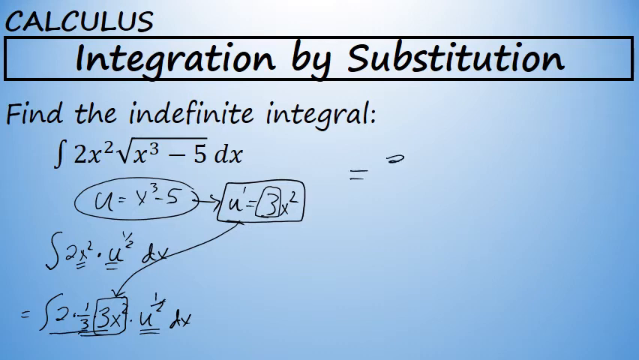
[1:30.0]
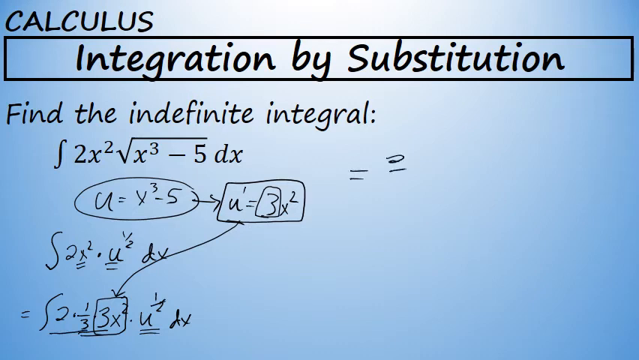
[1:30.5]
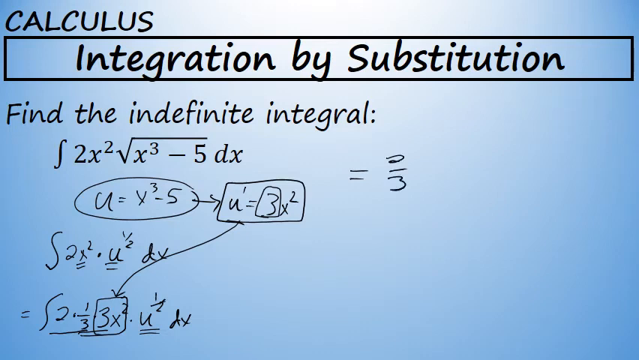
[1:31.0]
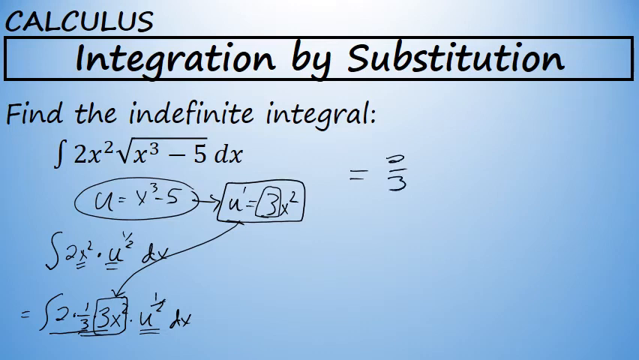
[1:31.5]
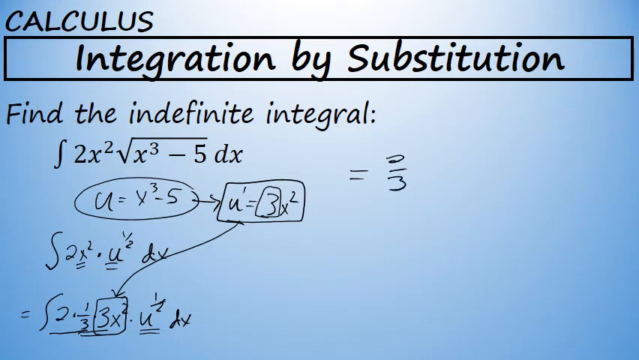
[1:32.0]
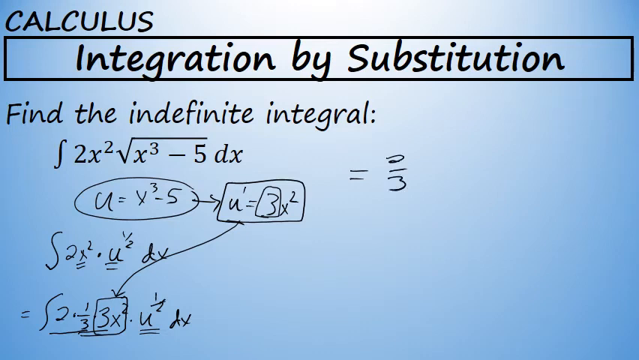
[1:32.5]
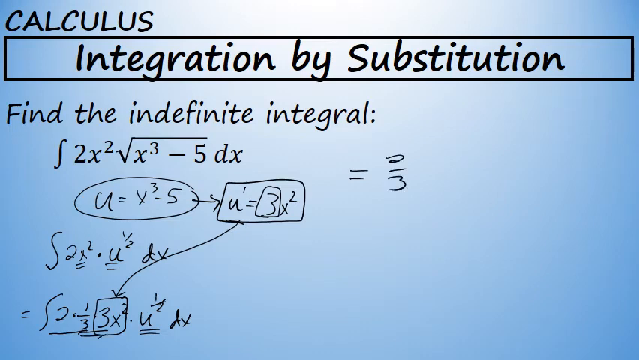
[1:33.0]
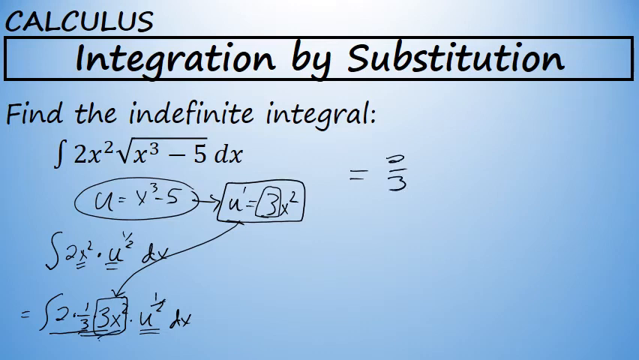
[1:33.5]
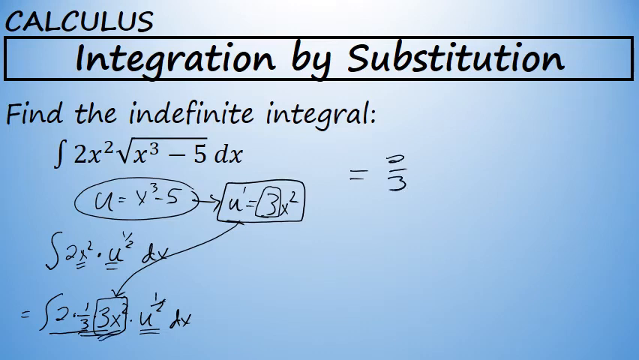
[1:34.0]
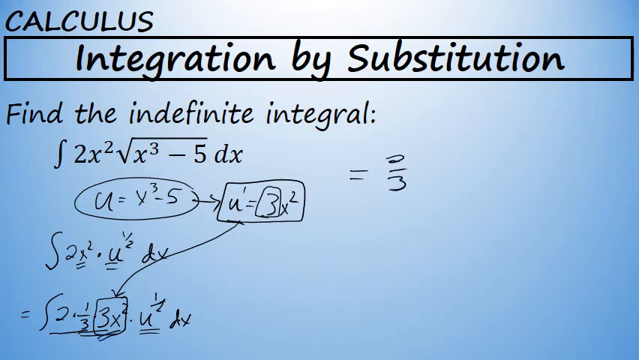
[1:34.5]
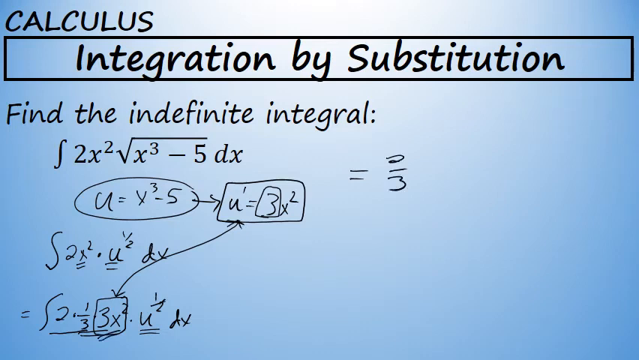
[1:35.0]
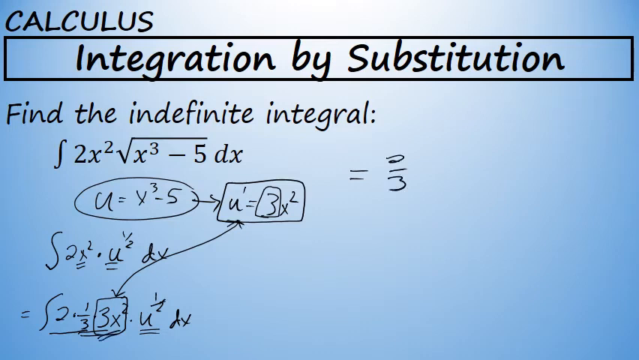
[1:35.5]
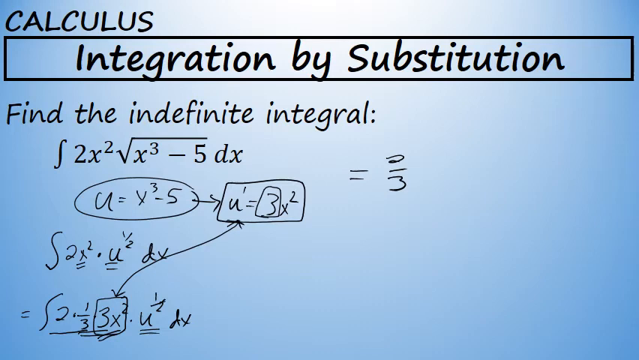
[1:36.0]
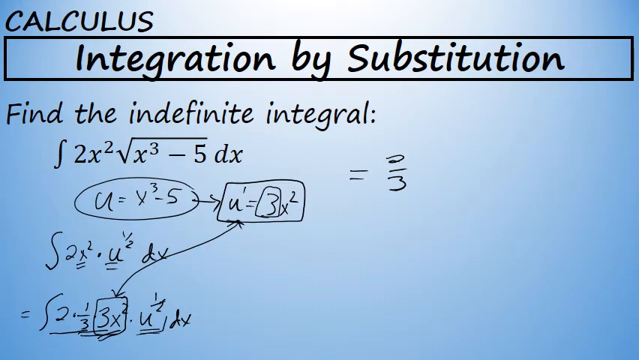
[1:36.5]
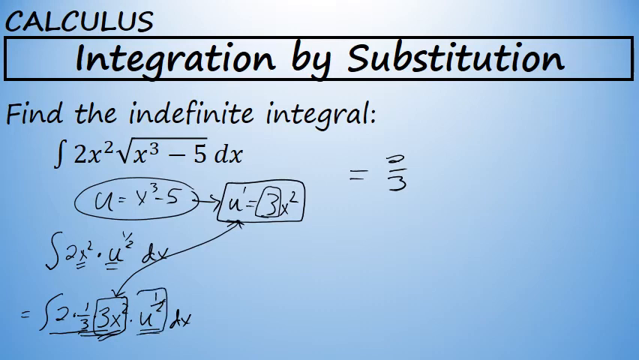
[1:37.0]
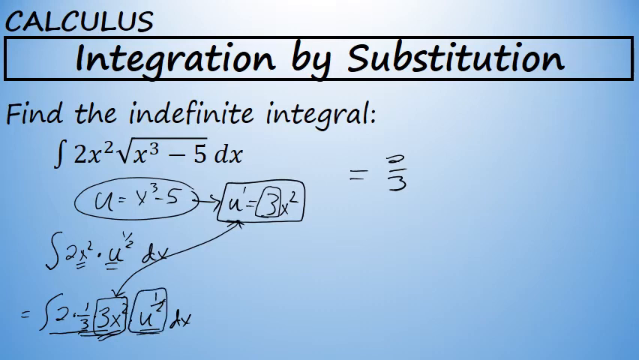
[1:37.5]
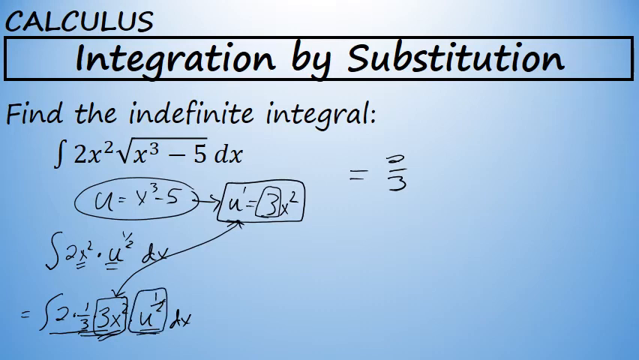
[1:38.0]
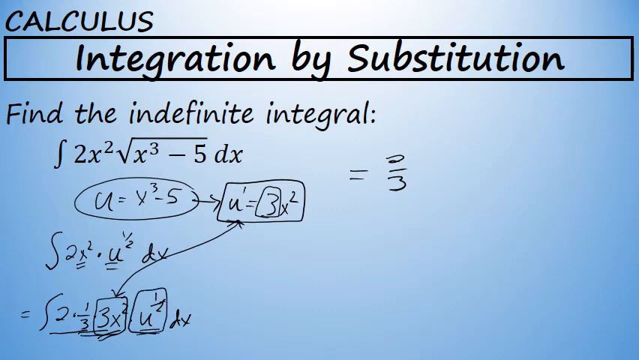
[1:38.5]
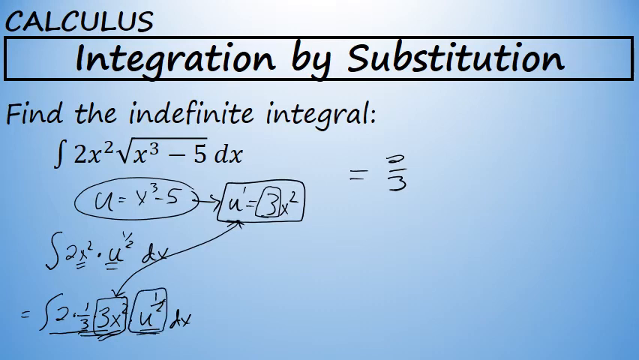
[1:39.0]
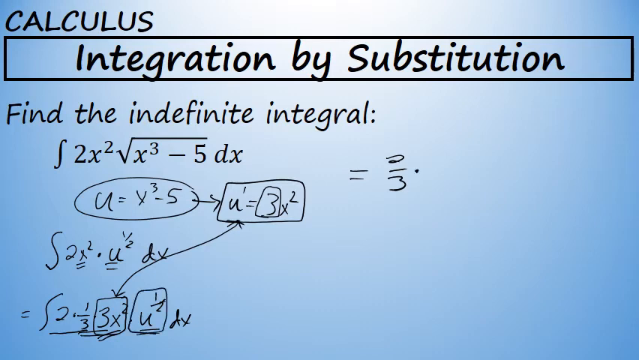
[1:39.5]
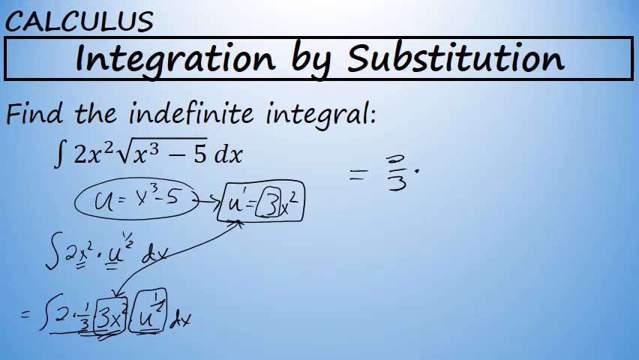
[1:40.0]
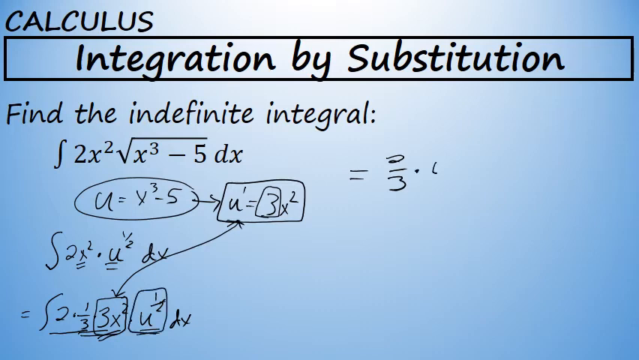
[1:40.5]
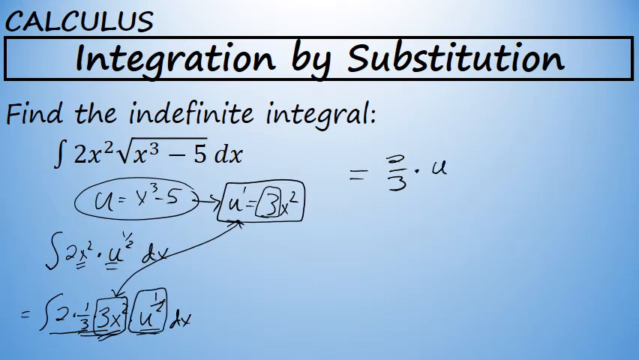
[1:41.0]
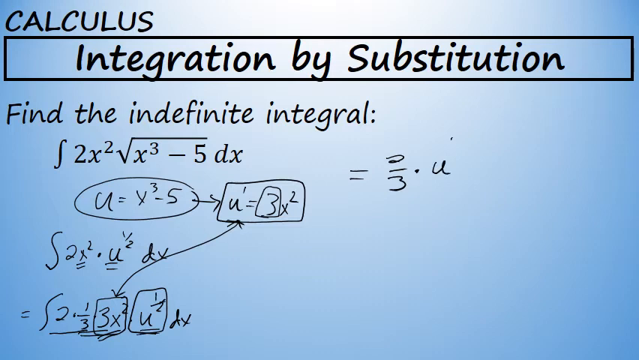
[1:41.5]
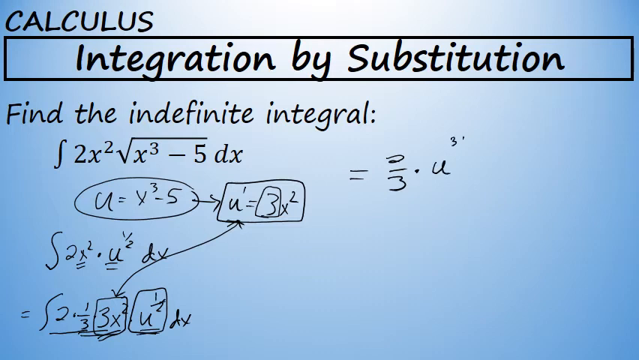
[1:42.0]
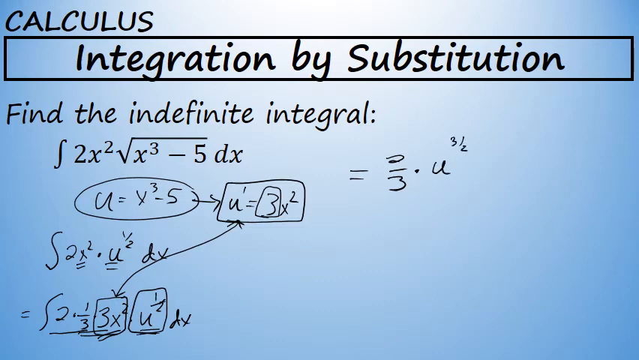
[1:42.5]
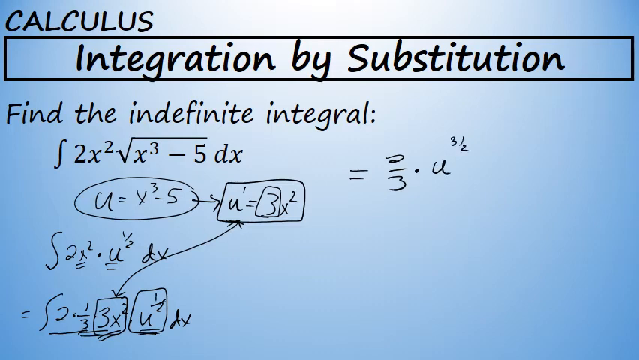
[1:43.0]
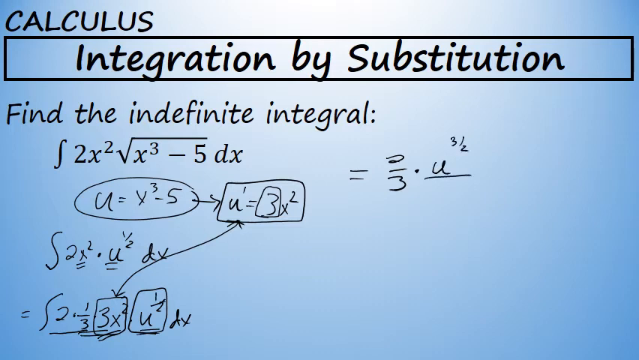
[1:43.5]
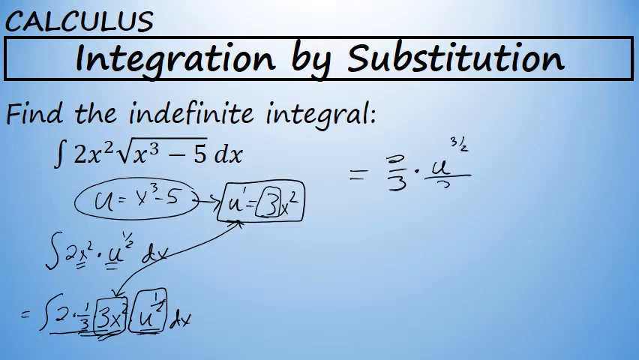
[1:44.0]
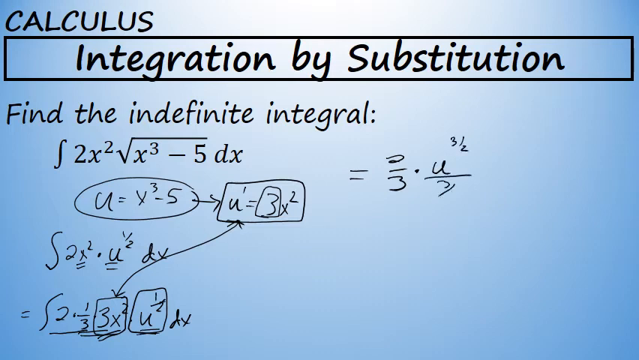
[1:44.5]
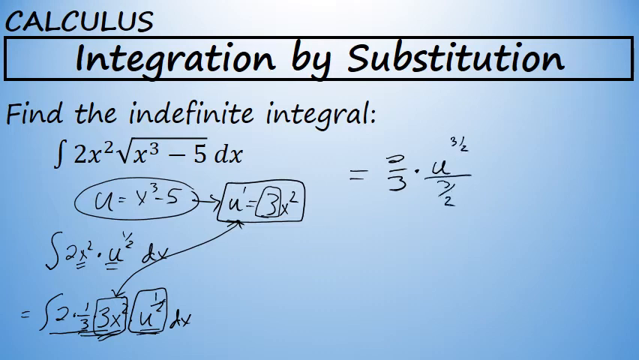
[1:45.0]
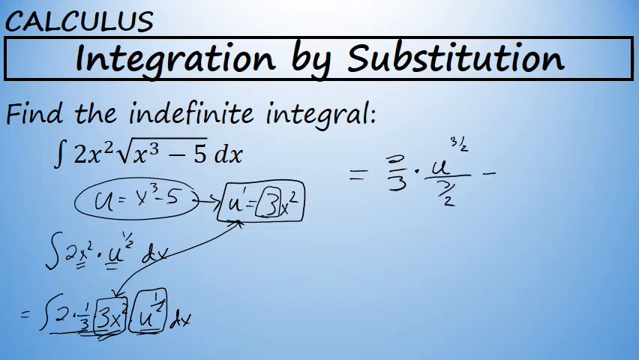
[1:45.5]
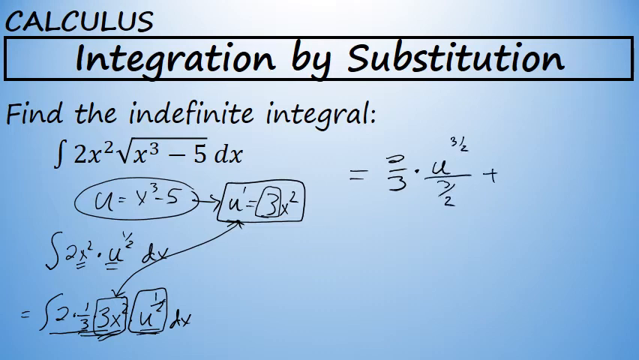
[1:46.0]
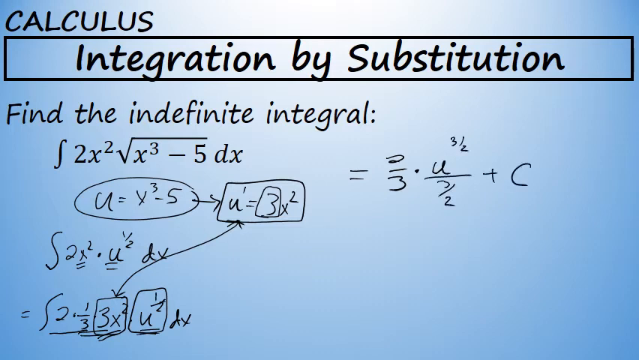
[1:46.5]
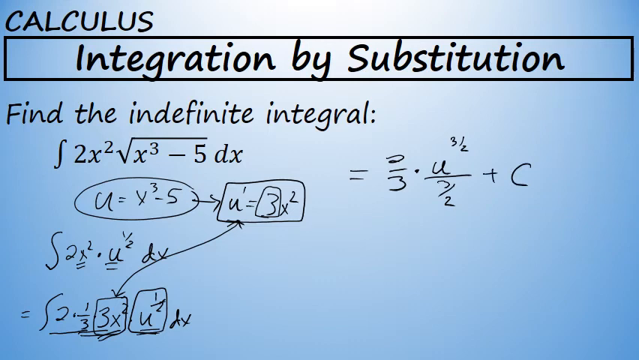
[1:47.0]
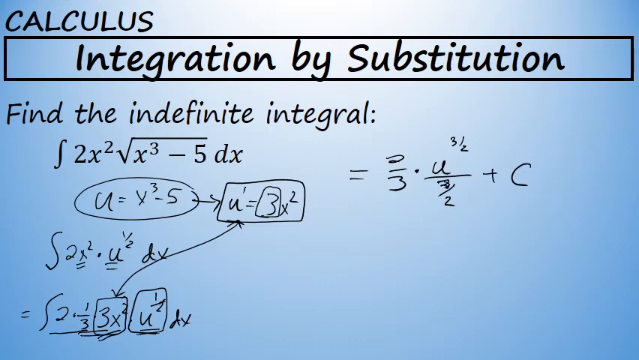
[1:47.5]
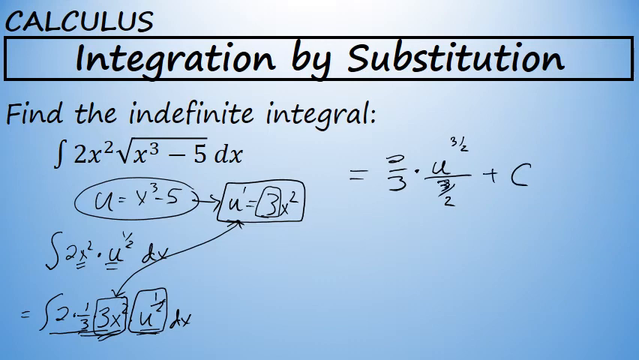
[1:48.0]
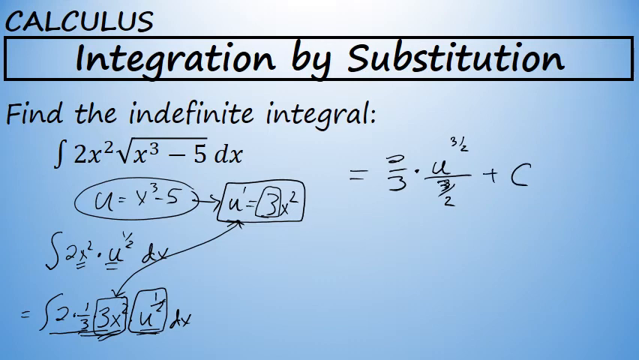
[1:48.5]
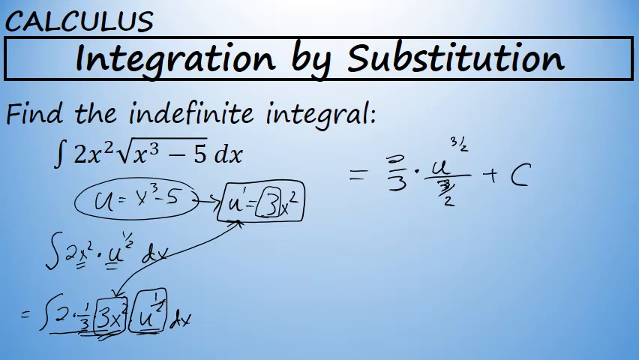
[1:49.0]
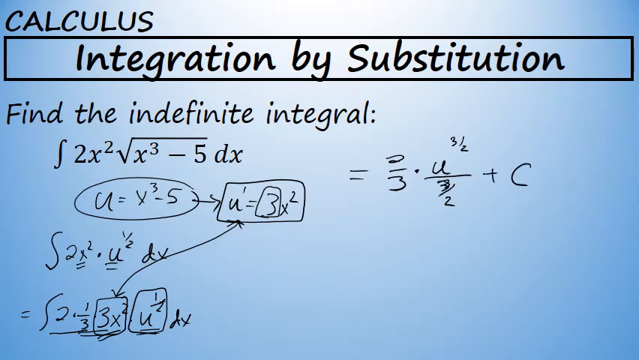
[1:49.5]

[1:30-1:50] The screen is blue, darker at the outside and lighter toward the middle, where it is almost white. In the top left-hand corner "CALCULUS" is written in black. Beneath it, a rectangle runs the length of the screen from left to right, containing "INTEGRATION BY SUBSTITUTION" in black. Below is "FIND THE INDEFINITE INTEGRAL", then an integral symbol and 2x superscript 2, long division sign, x superscript 3 minus 5 dx. Someone has written underneath u equals x superscript 3 minus 5, circled it, and drawn an arrow pointing right to u equals 3x superscript 2, which is boxed. Under that is 2x superscript 2 decimal u half dx, with the x and the u underlined, and beneath it 2 decimal third 3x superscript 2 decimal u half dx. A box is drawn around the 3x and the u, and an arrow goes from that 3 and u to the 3 in the first equation.